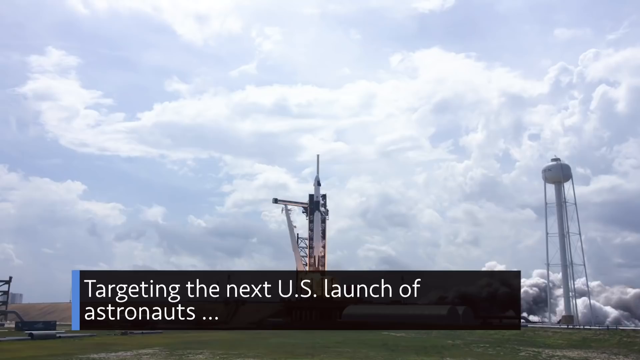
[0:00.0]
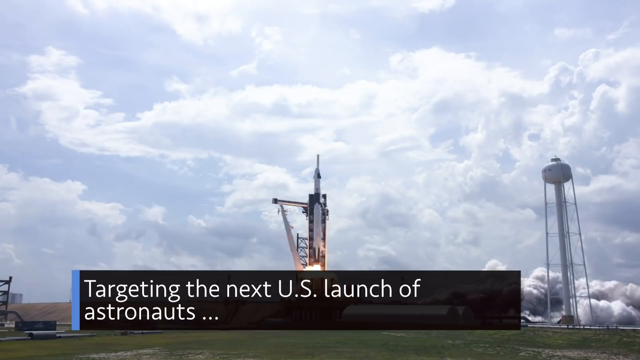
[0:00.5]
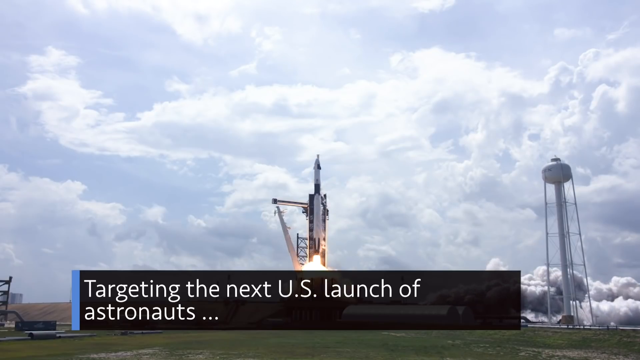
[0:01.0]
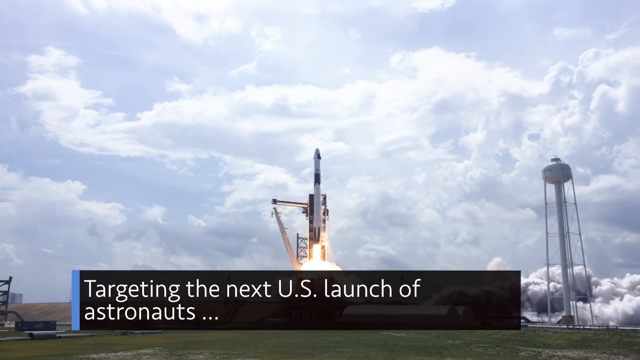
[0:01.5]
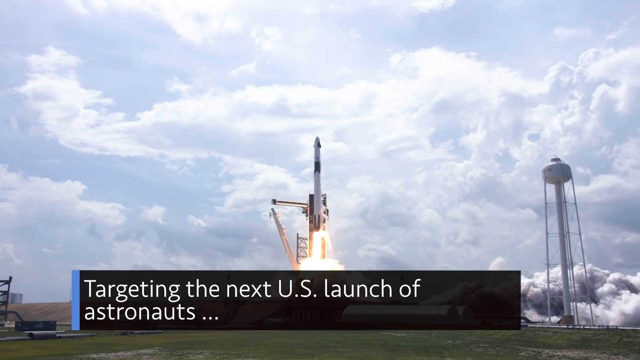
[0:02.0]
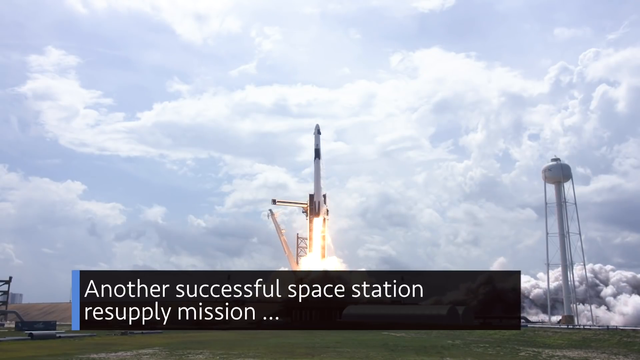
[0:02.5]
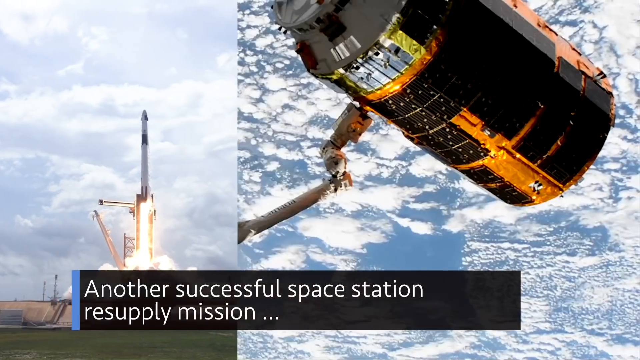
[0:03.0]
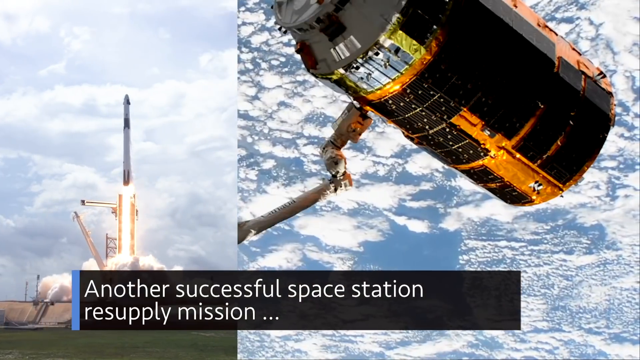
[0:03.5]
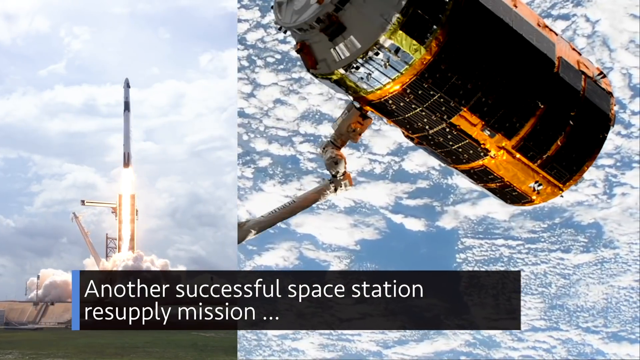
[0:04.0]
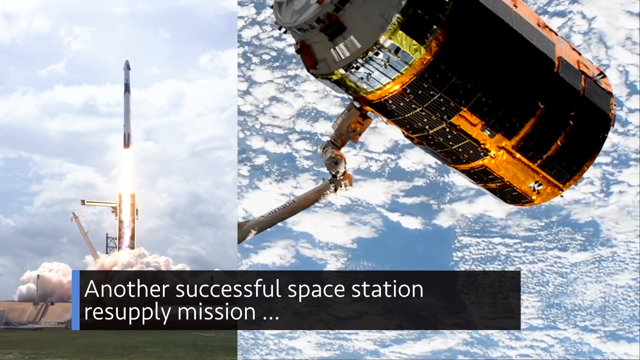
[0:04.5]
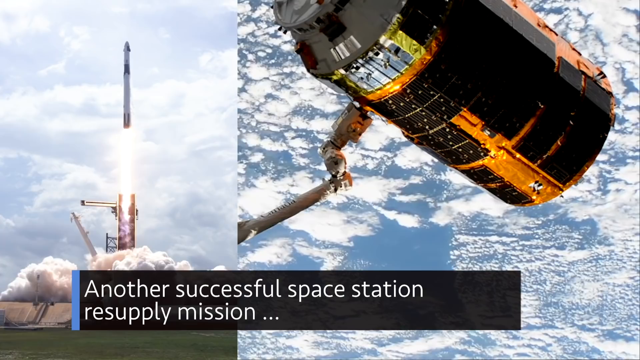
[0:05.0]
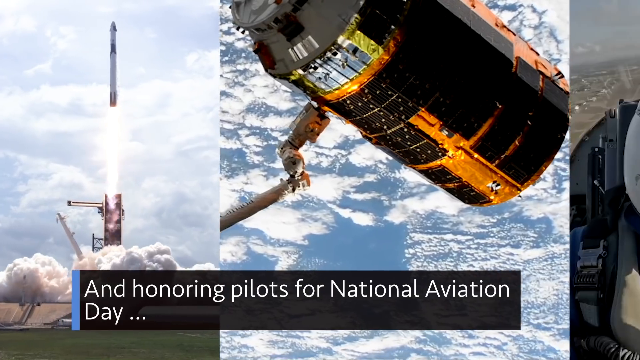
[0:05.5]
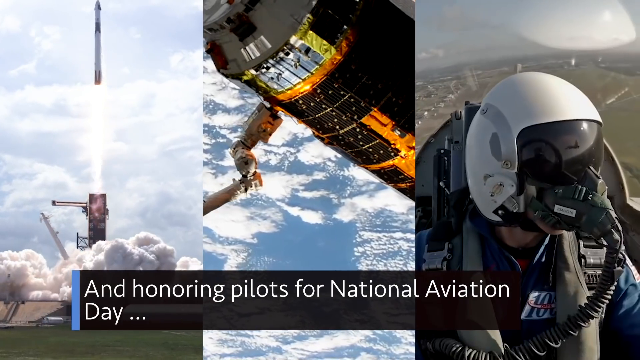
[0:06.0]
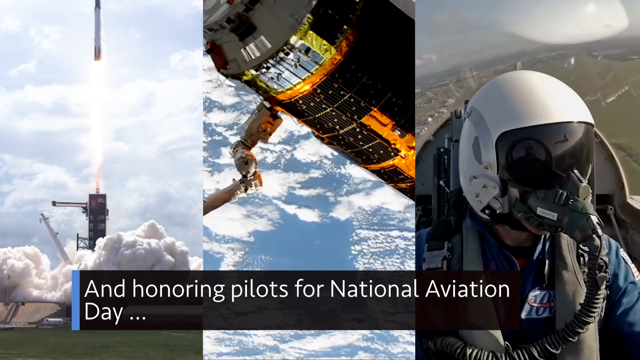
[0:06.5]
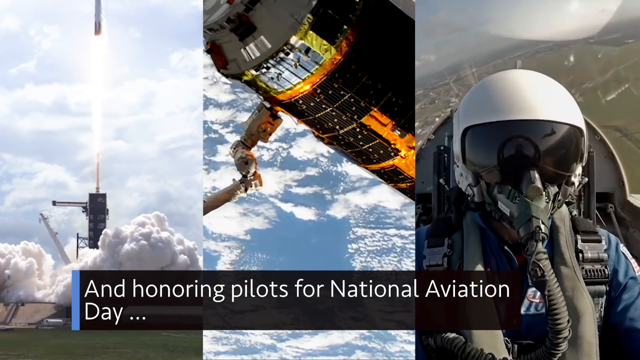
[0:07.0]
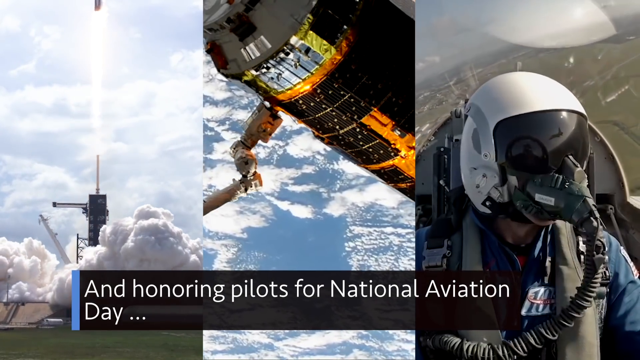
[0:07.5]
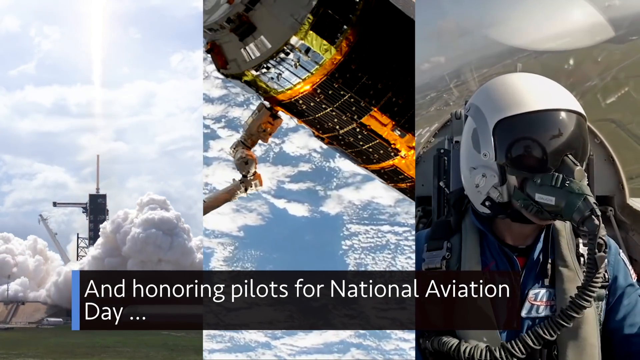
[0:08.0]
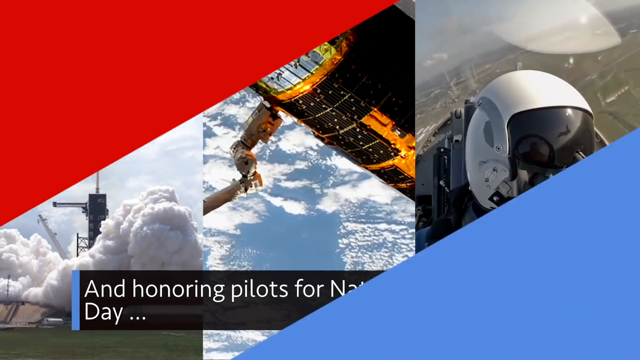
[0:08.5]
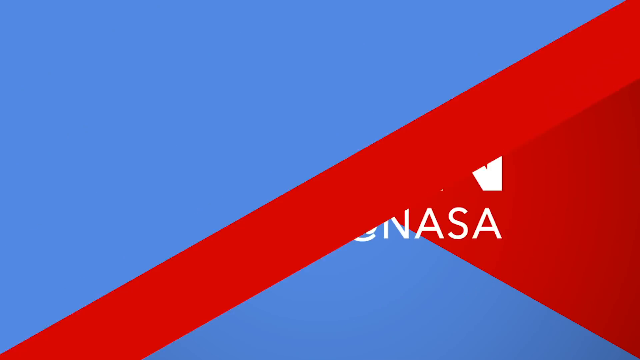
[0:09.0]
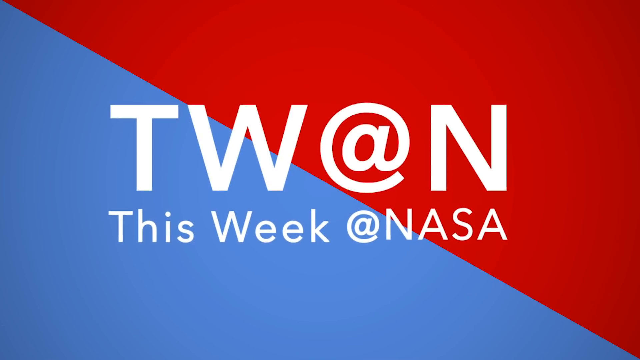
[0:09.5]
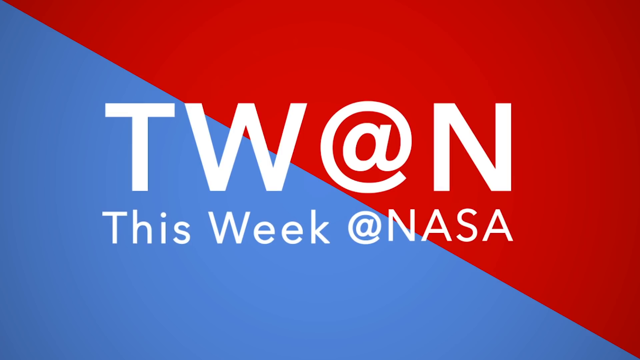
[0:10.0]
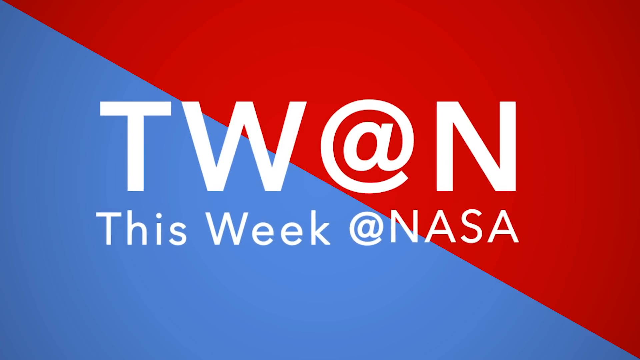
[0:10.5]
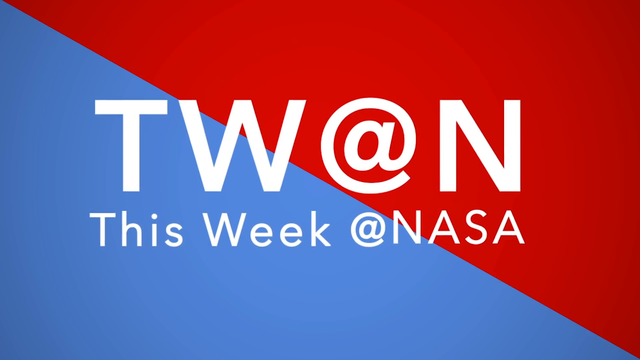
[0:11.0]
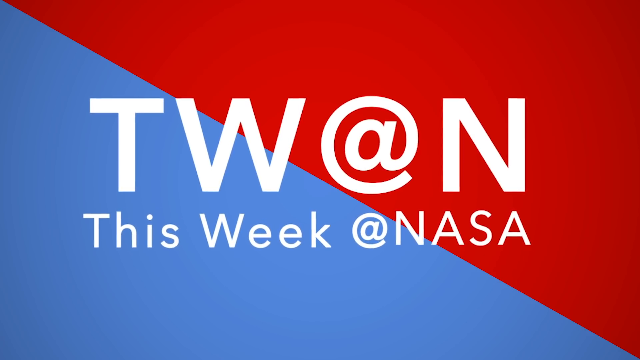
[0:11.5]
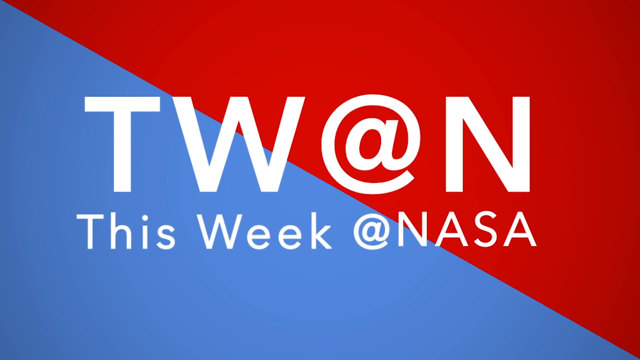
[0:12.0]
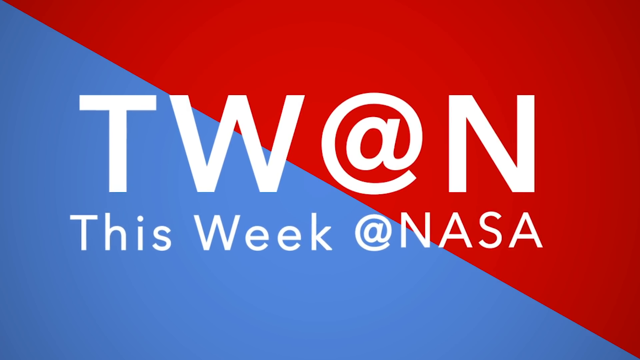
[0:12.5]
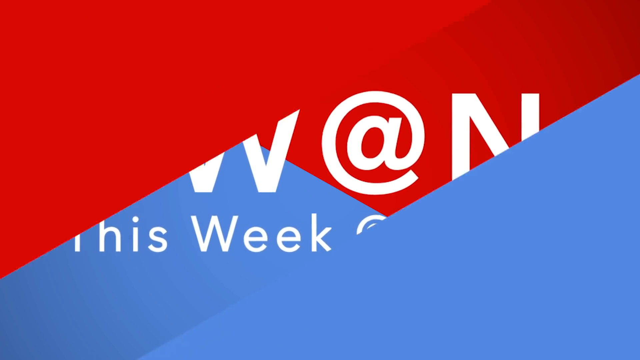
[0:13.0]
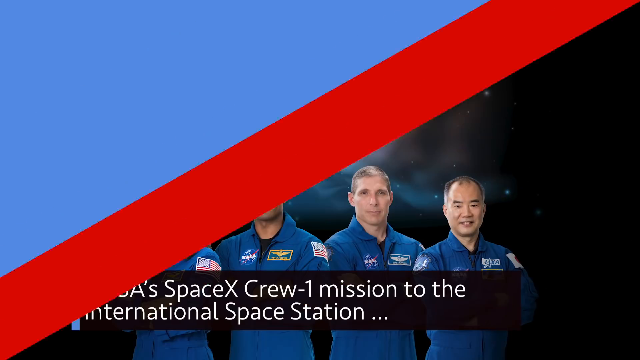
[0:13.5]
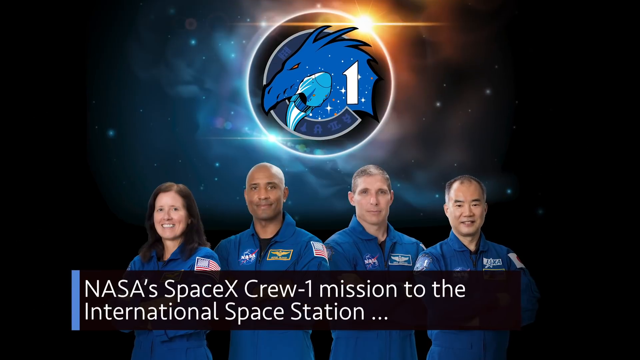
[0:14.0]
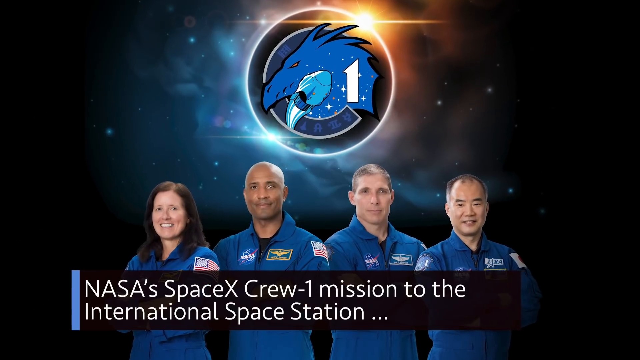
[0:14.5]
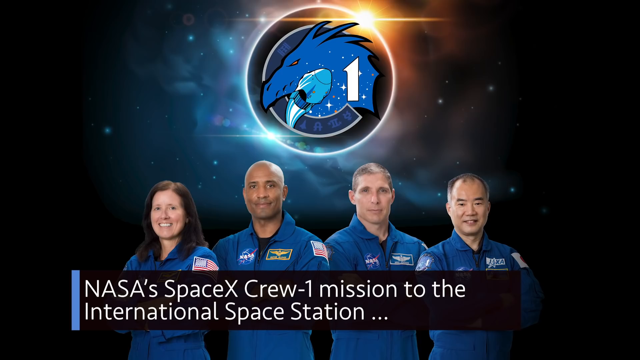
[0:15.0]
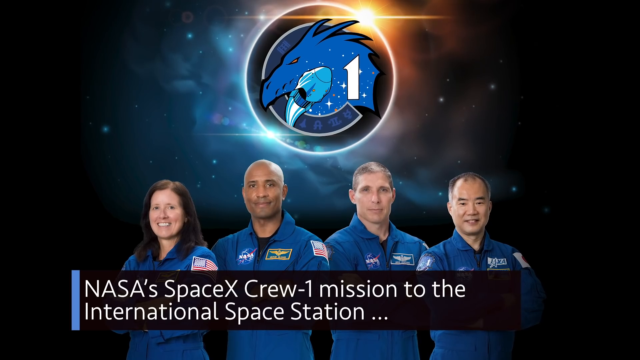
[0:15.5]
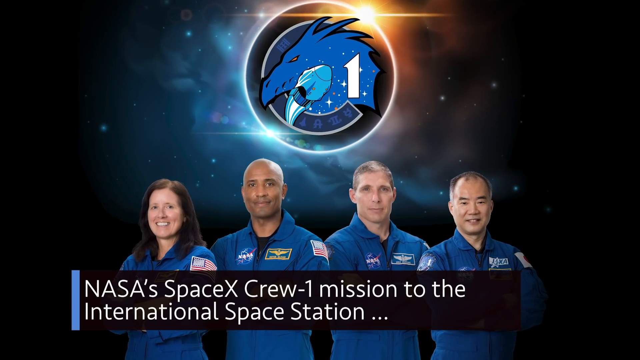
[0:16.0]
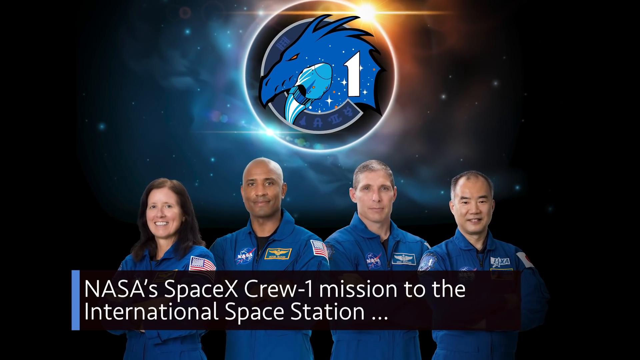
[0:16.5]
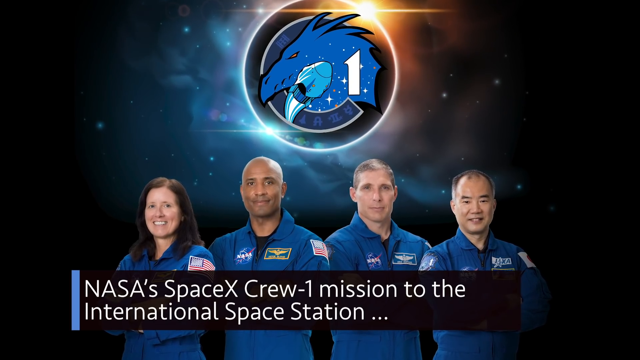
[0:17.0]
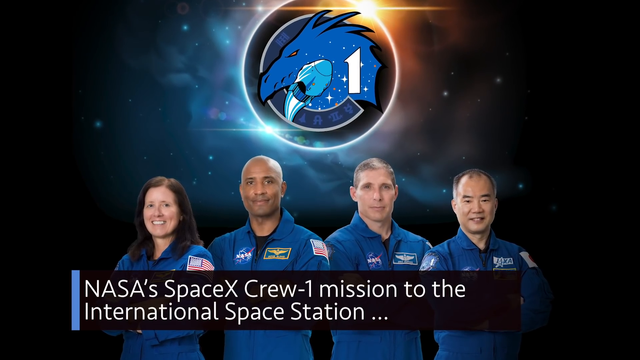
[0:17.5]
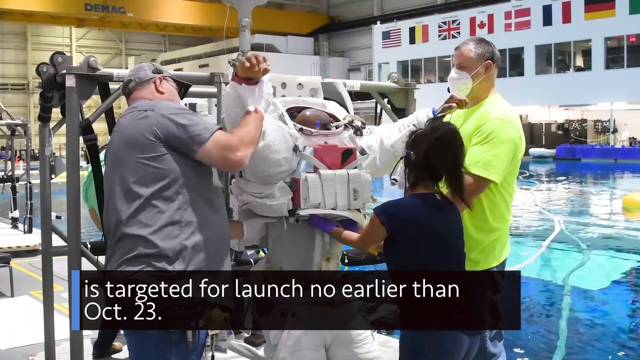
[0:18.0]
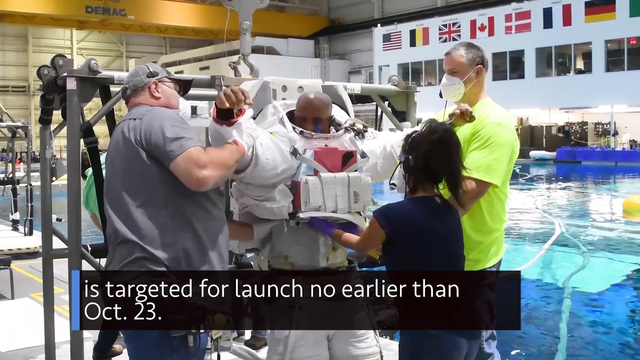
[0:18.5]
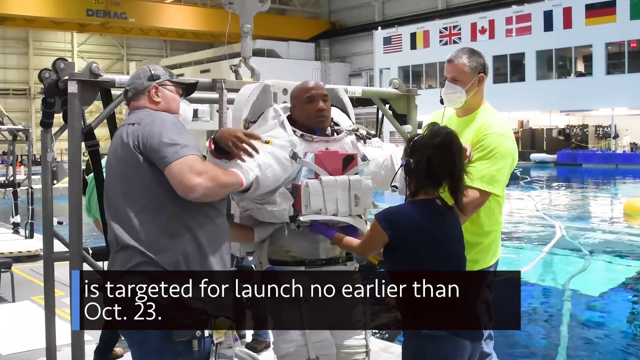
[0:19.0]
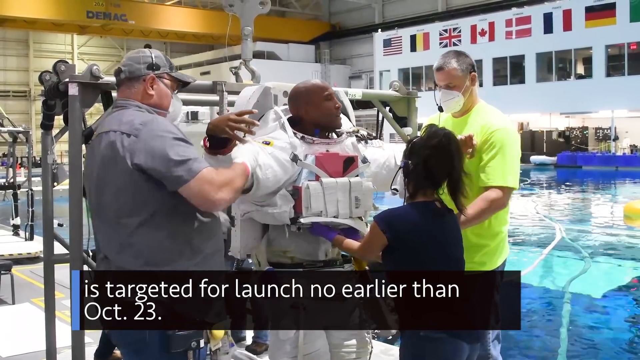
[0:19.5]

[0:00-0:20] The video opens on a rocket ship mid-launch off its platform, with a water tower on the right side of the frame and a lot of clouds in the background. A banner at the bottom reads "targeting the next US launch of astronauts and" and "another successful space station resupply mission." A three-part view follows: on the left the rocket ship launches, in the center the US space station is in space with the Earth underneath it, and on the right a pilot is in flight wearing a white helmet with a black eye cover and an oxygen mask. Text at the bottom reads "honoring pilots for National Aviation Day." The scene changes to a split screen, half red and half blue, with text that includes "this week" and "@NASA." Next the crew members are shown: a white woman, an African-American man, a white man, and an Asian man, with the text "NASA's SpaceX crew one mission to the International Space Station." The scene changes again and the bottom banner changes to "is targeted for launch no earlier than October 23rd" as the African-American man is placed into an astronaut suit, with three people around him securing the suit.